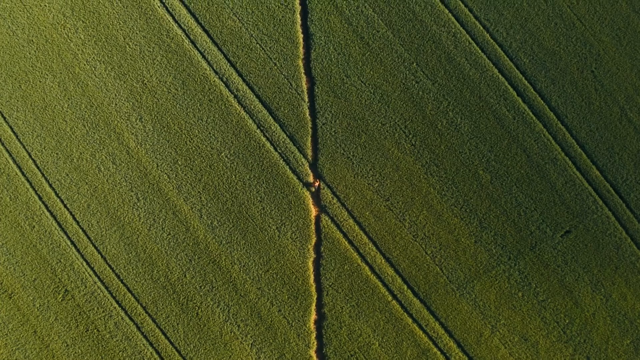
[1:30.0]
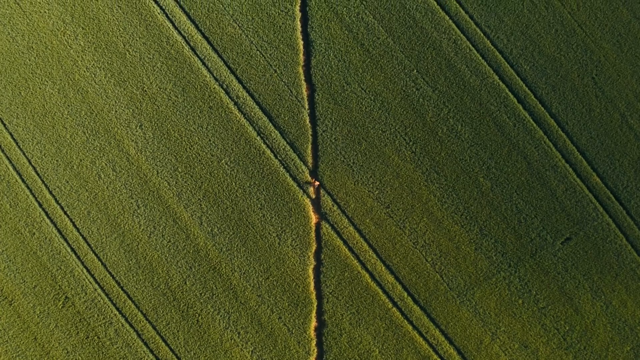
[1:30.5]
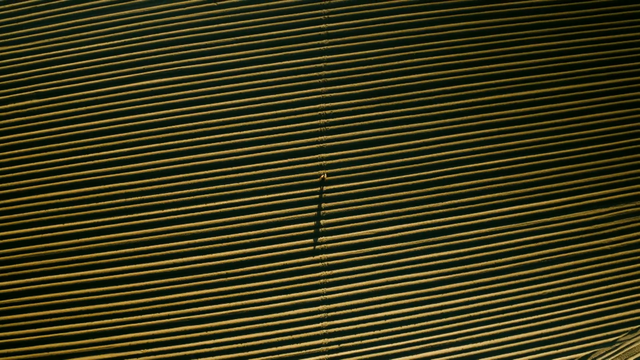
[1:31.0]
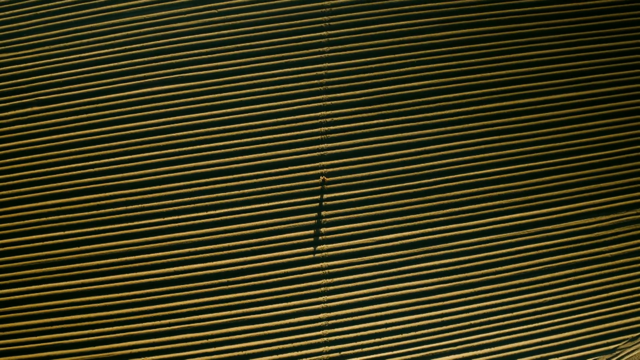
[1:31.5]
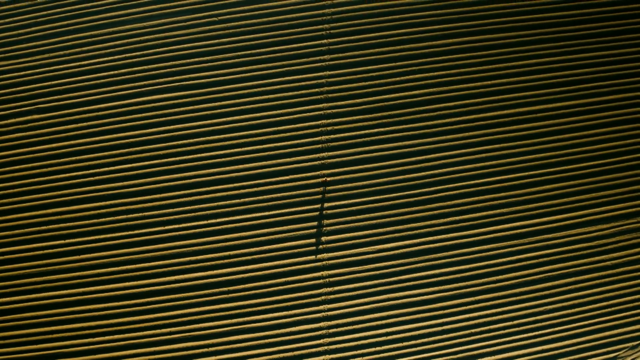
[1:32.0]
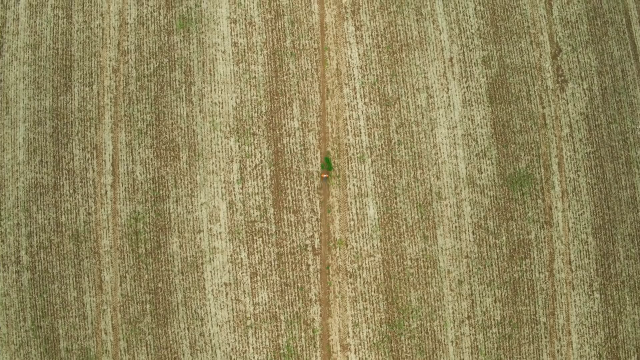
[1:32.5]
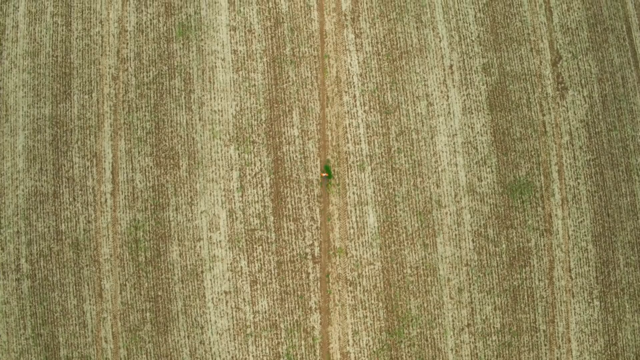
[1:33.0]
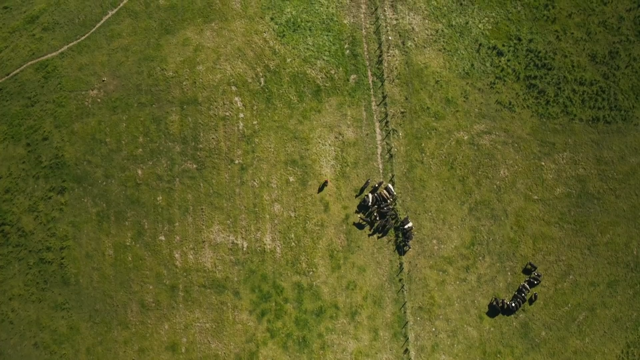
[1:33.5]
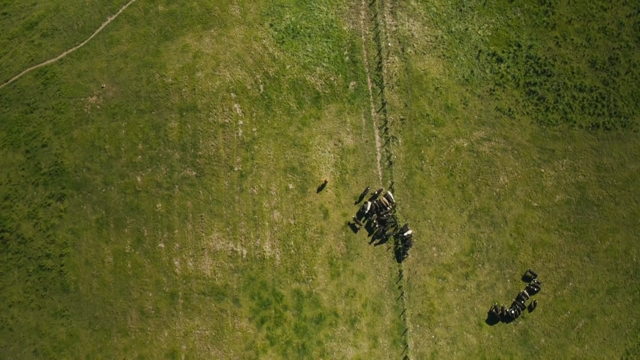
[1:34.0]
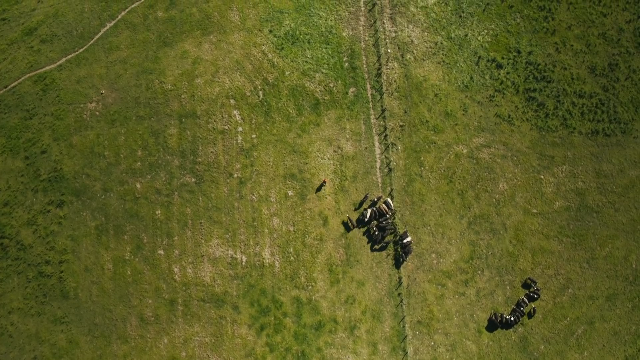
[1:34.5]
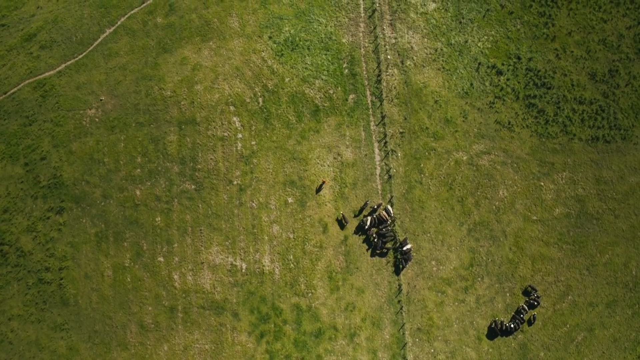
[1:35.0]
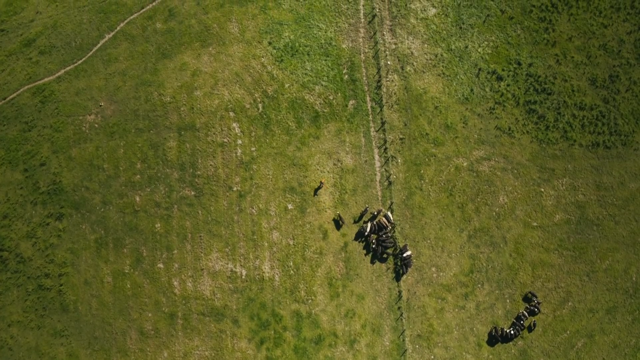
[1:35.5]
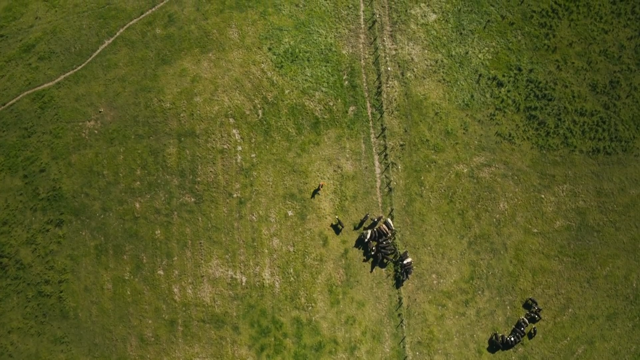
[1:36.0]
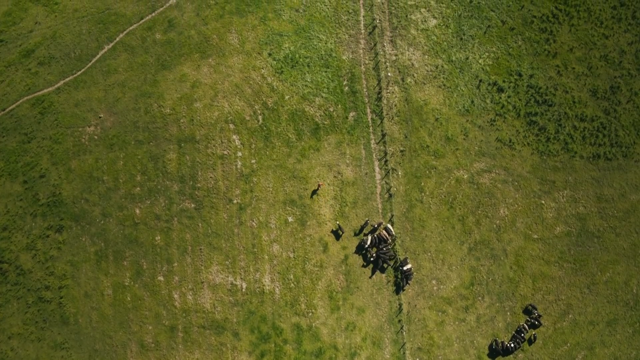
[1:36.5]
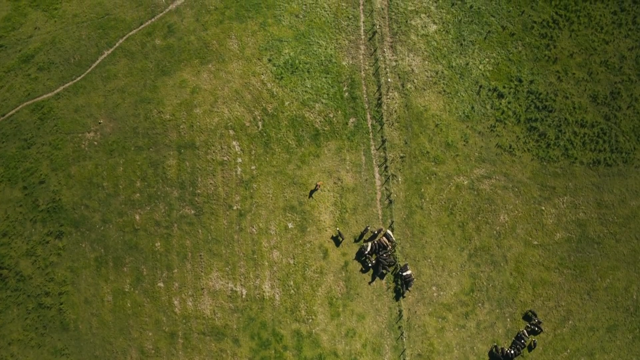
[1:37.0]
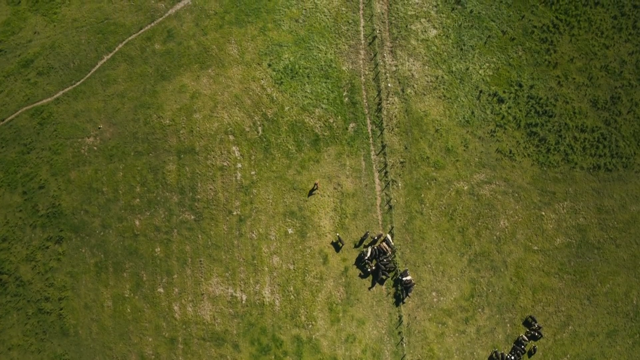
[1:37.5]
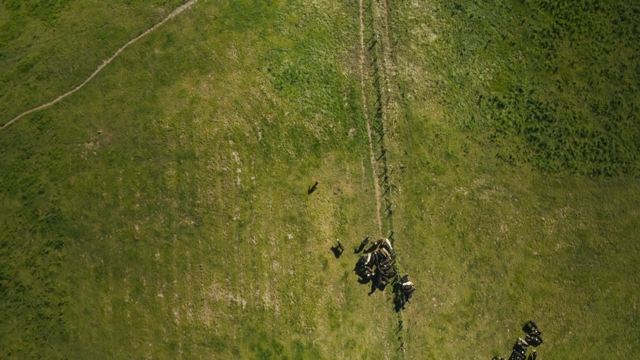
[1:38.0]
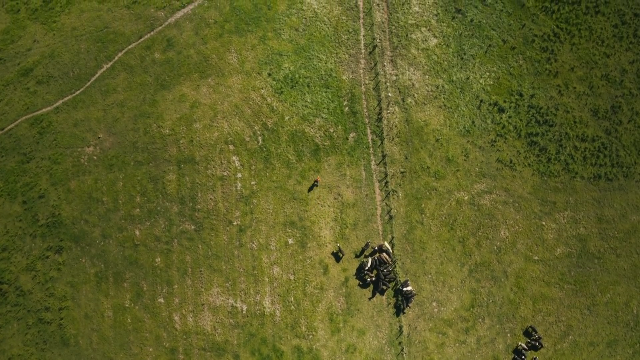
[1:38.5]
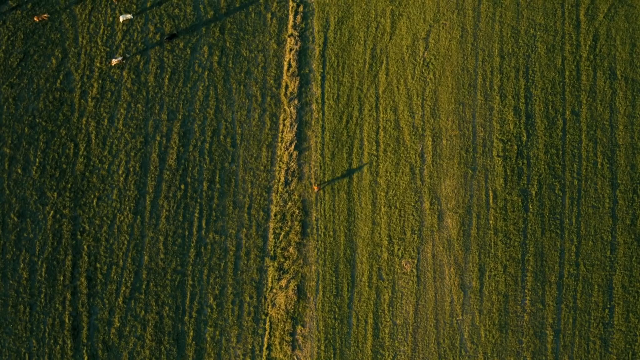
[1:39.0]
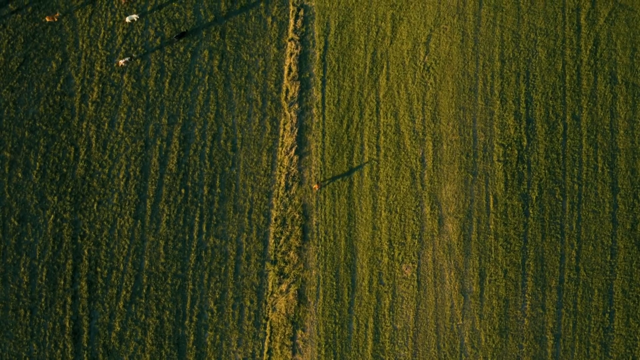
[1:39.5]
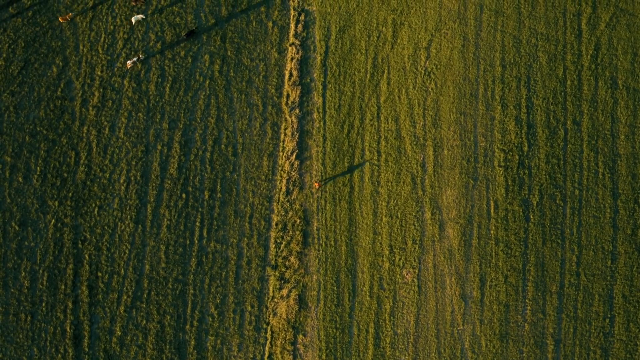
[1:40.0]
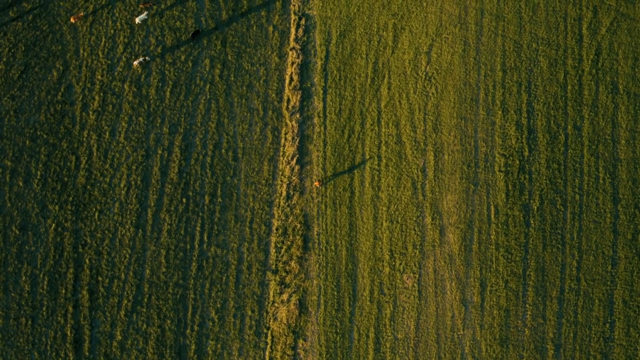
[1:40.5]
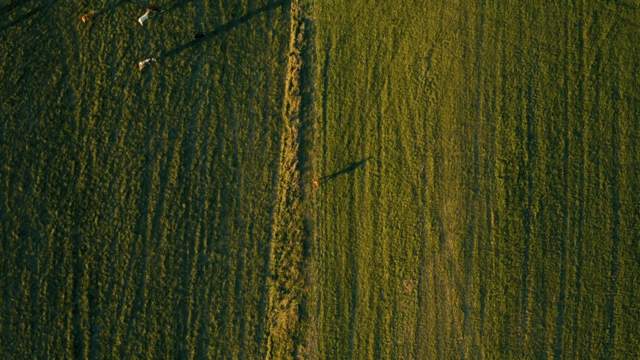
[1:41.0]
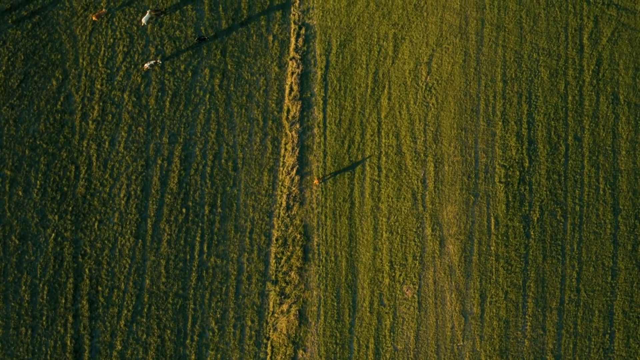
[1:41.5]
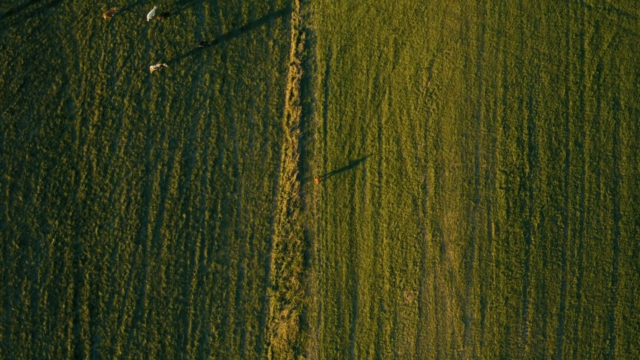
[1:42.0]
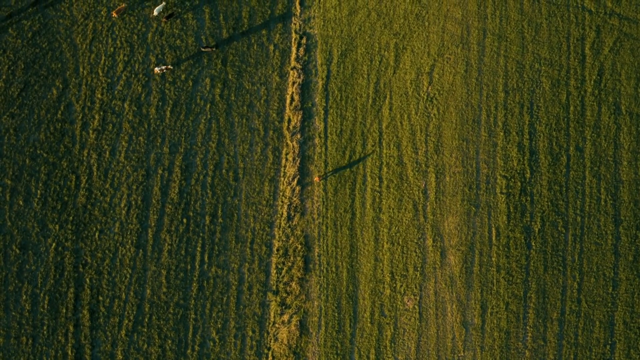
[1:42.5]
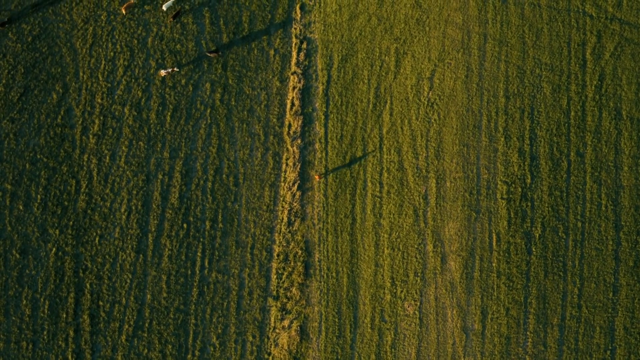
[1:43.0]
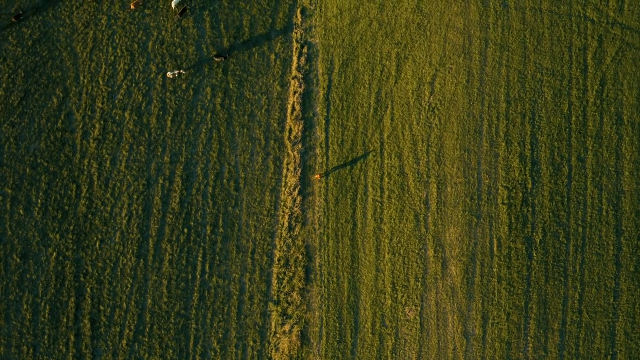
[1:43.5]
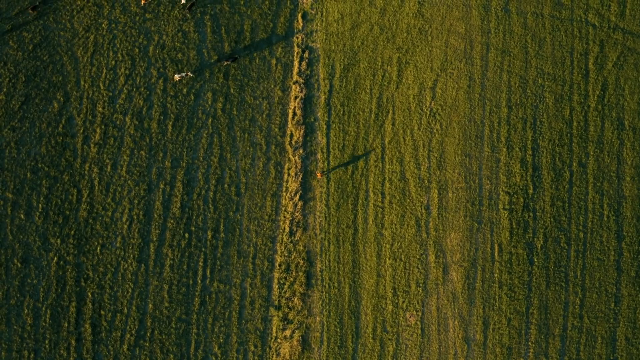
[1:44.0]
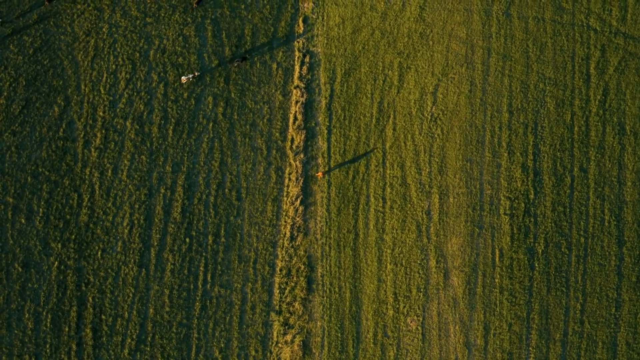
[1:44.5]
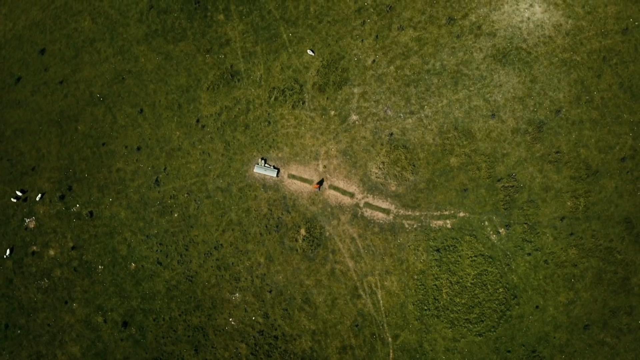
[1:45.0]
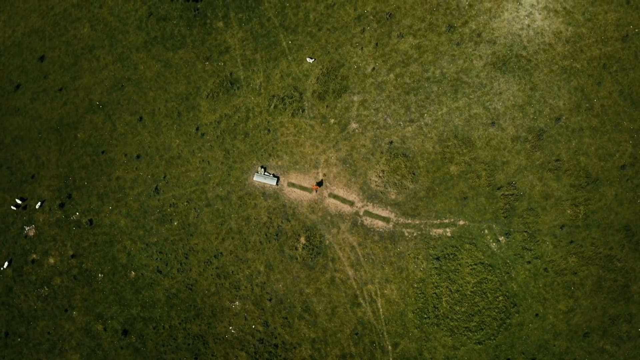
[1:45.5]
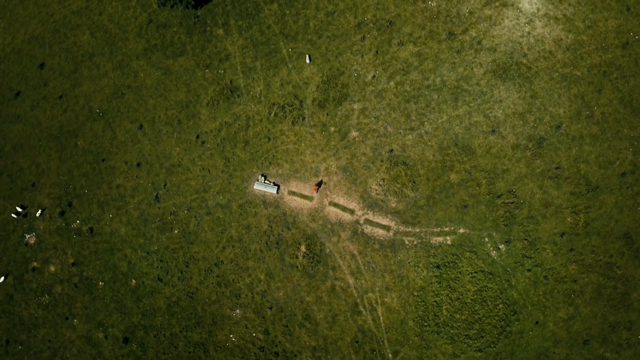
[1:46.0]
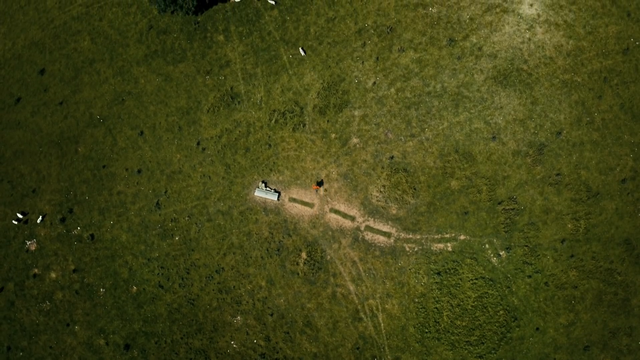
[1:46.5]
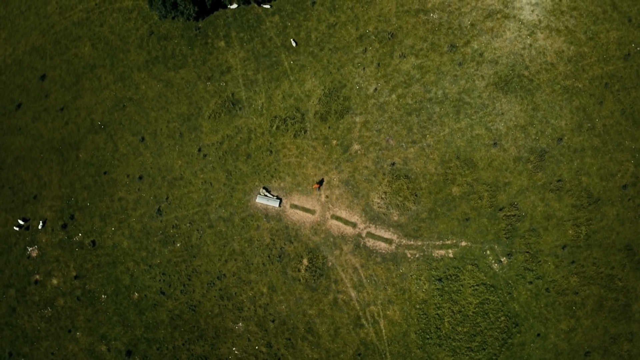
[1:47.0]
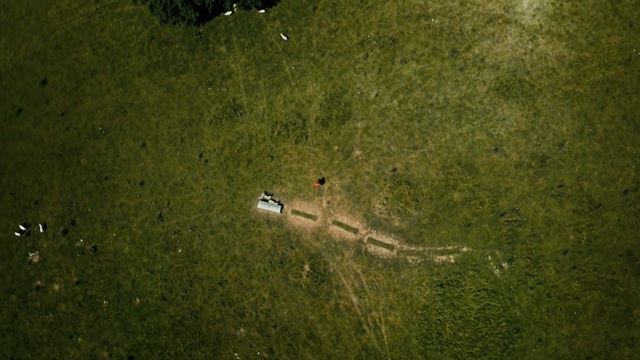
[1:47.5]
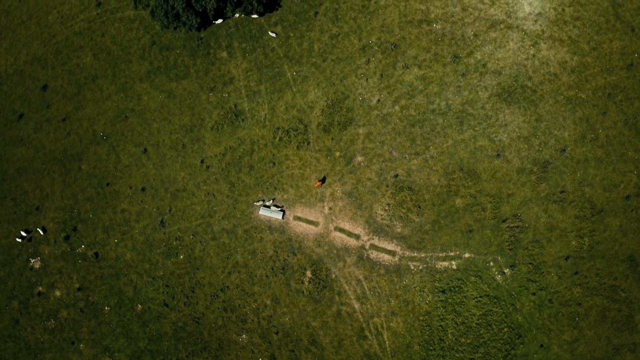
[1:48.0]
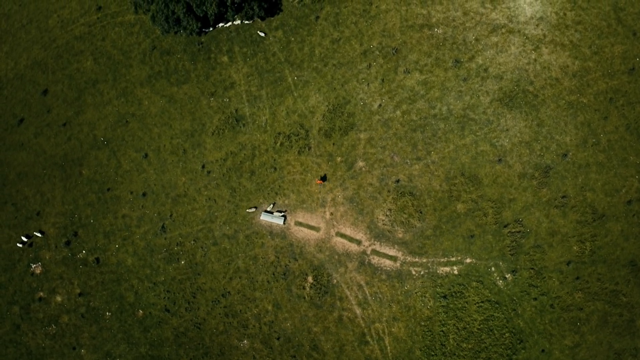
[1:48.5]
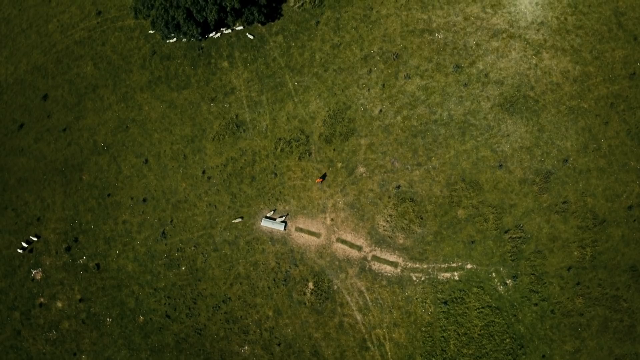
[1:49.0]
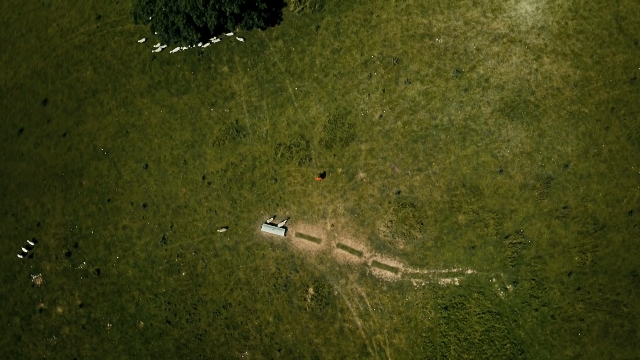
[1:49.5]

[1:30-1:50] Made from high above, probably by a drone or some other aeronautical device, the video looks down on a person who appears to be either walking very fast or perhaps running. From so far up, the person's features are hard to make out; they look like a tiny black dot, mostly running on a road. The landscape constantly changes, sometimes flat green meadows, sometimes more rocky. Occasionally there are animals that look like farm animals, maybe sheep. In one shot the person walks across a large green meadow with a cluster of what may be sheep, white and kind of oblong, probably at least eight or nine of them, which then break out into a larger group of probably a couple dozen, off in the distance ahead of the figure. For most of the run the person is alone, with nothing else around them and no cars.